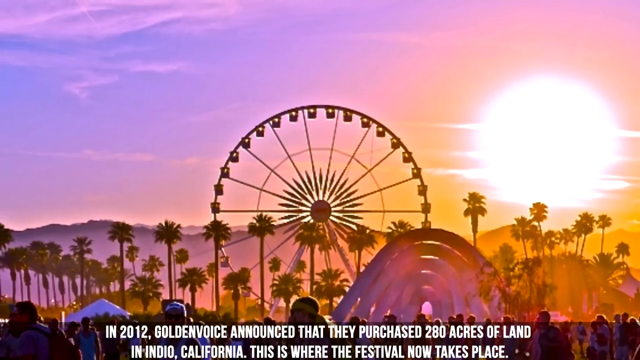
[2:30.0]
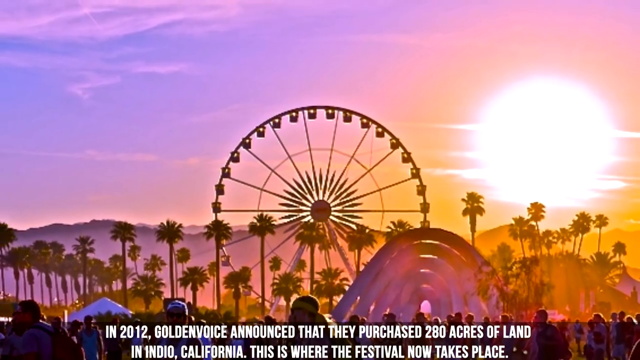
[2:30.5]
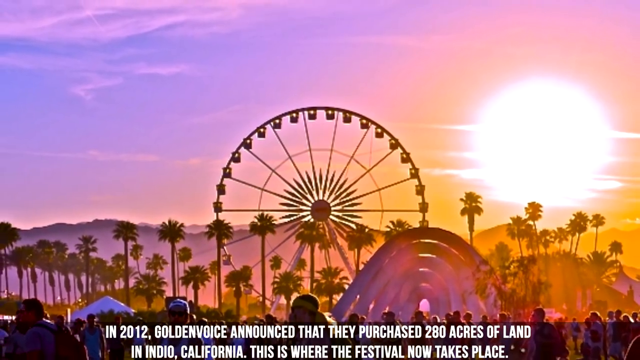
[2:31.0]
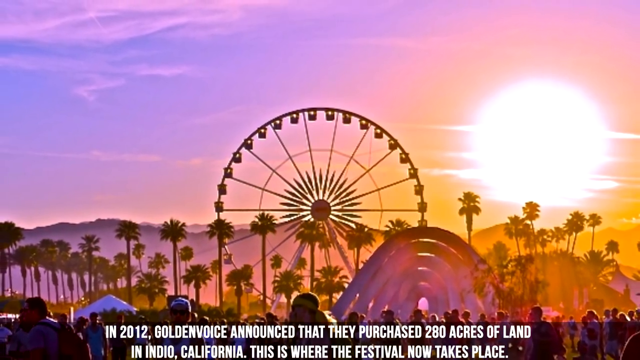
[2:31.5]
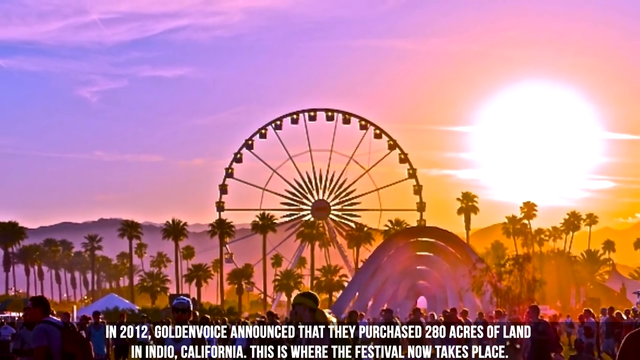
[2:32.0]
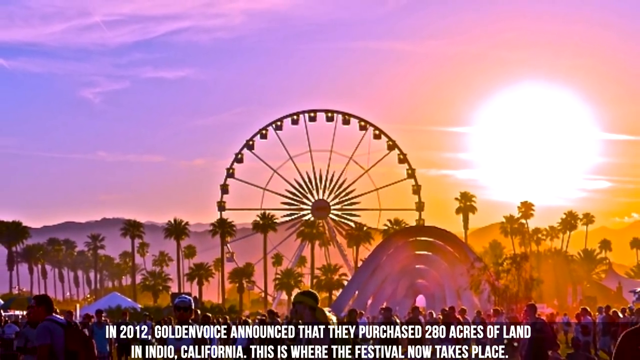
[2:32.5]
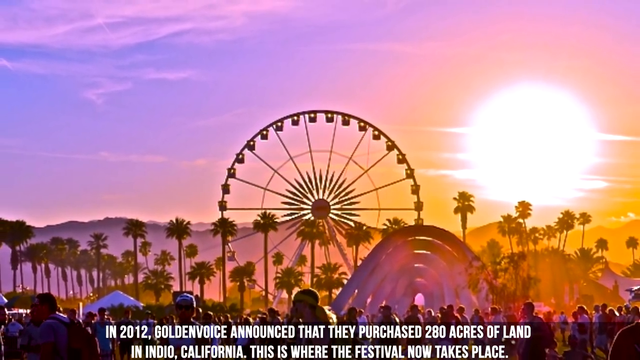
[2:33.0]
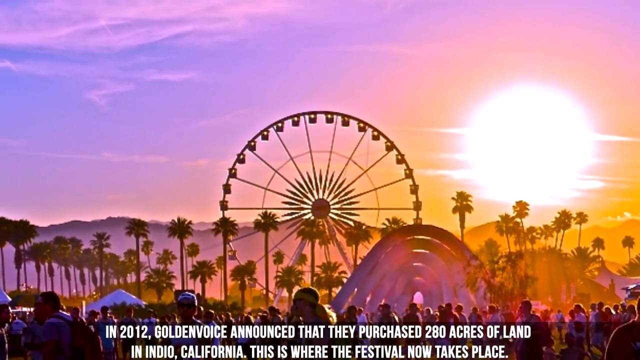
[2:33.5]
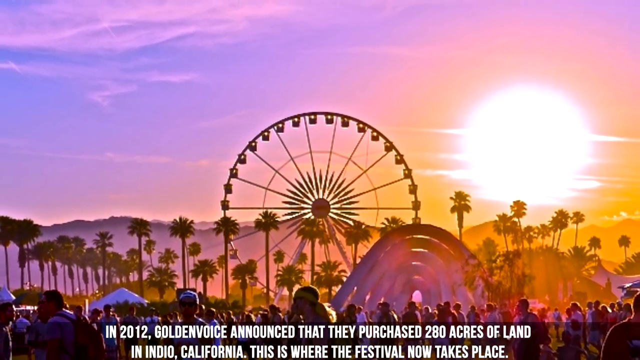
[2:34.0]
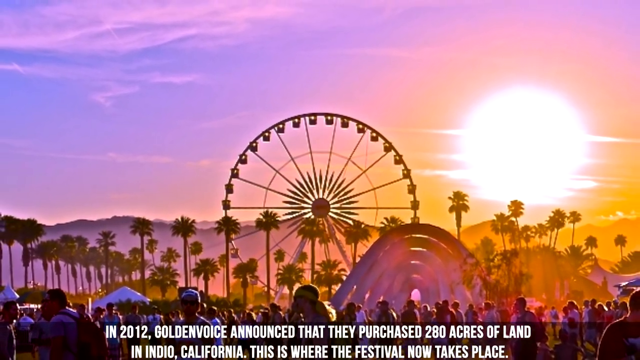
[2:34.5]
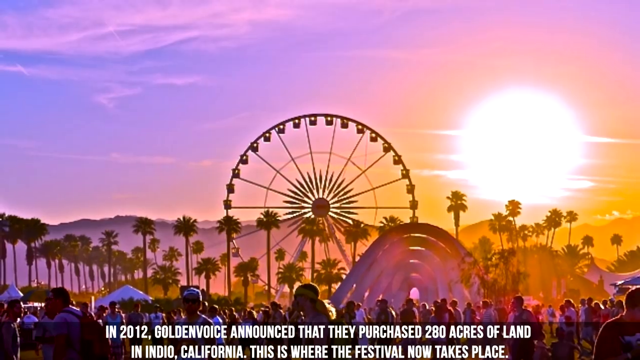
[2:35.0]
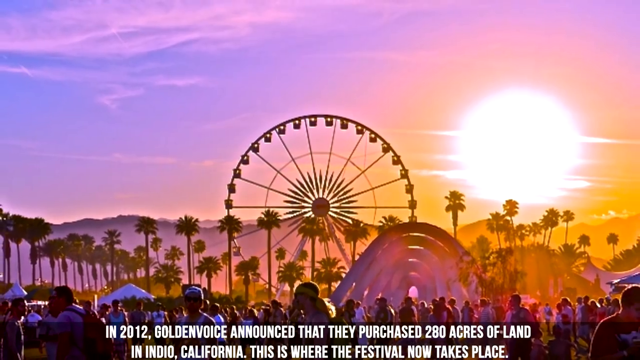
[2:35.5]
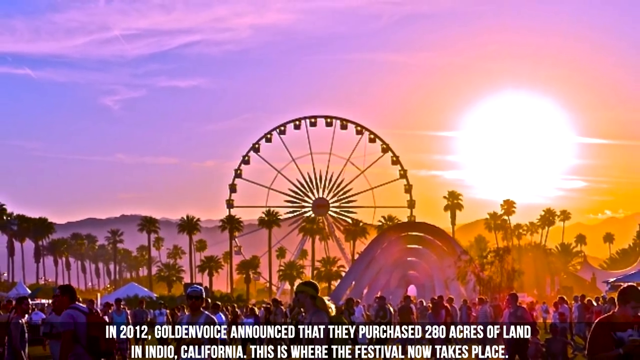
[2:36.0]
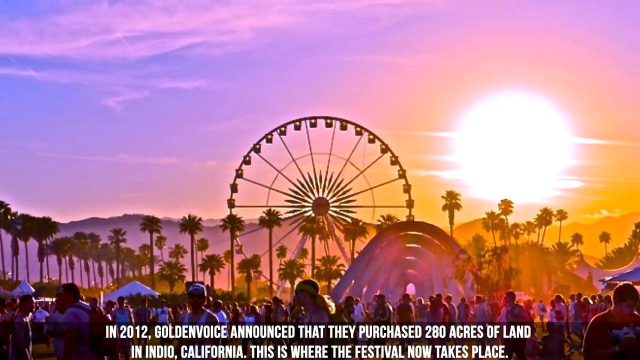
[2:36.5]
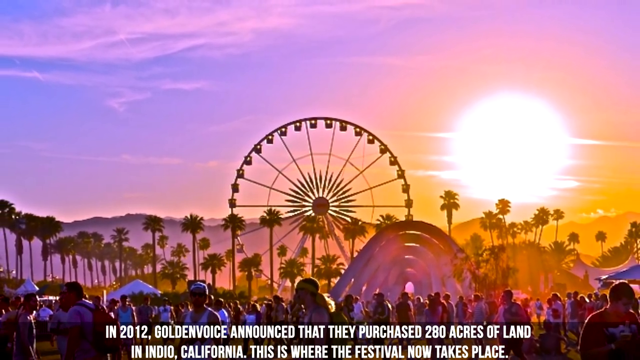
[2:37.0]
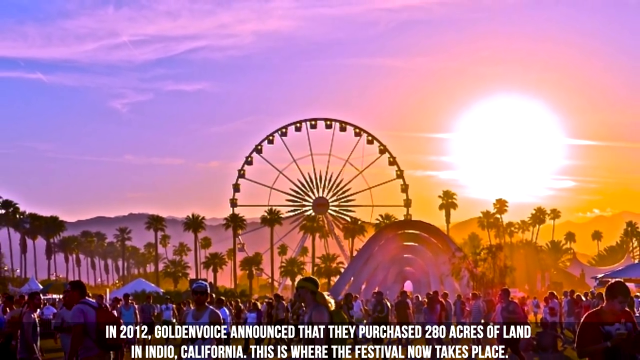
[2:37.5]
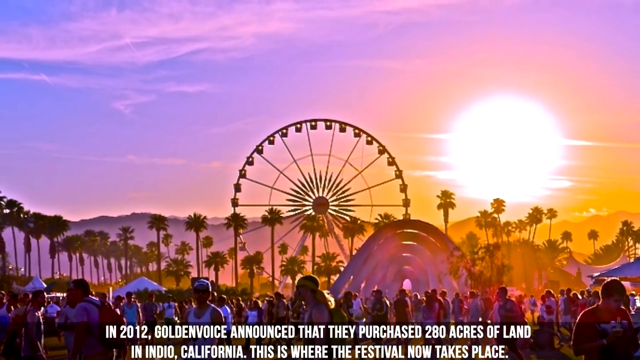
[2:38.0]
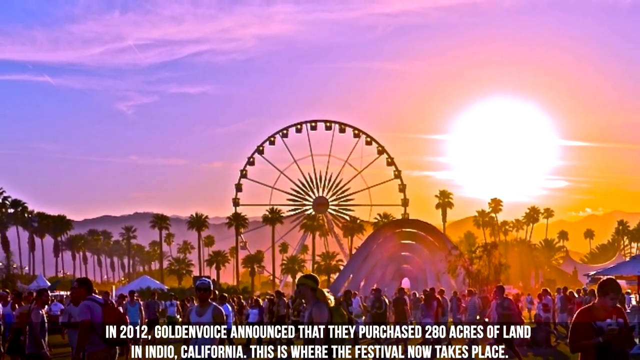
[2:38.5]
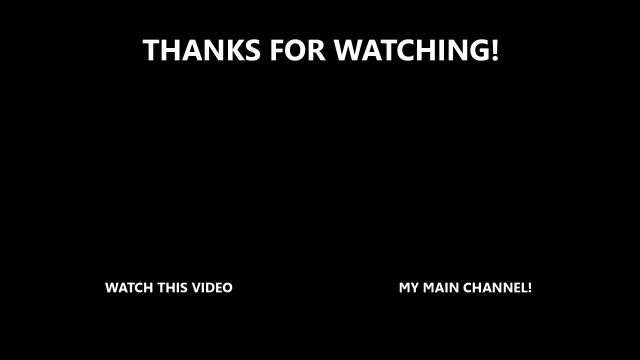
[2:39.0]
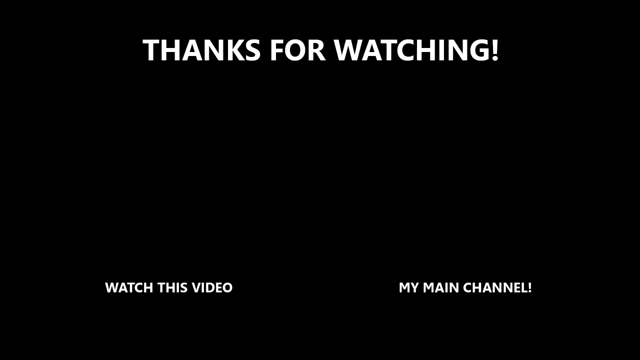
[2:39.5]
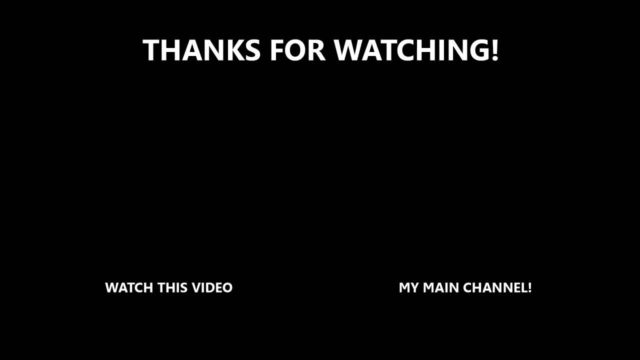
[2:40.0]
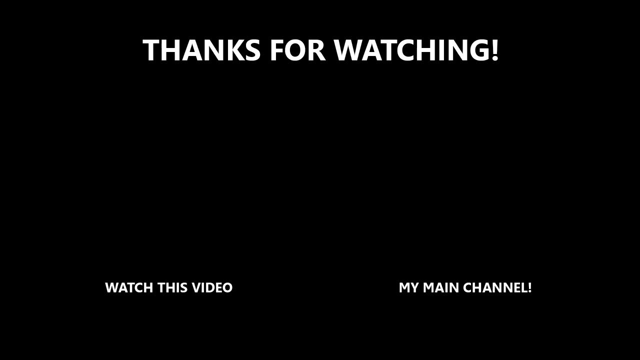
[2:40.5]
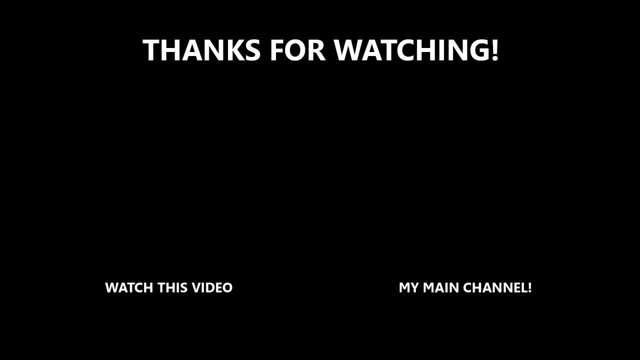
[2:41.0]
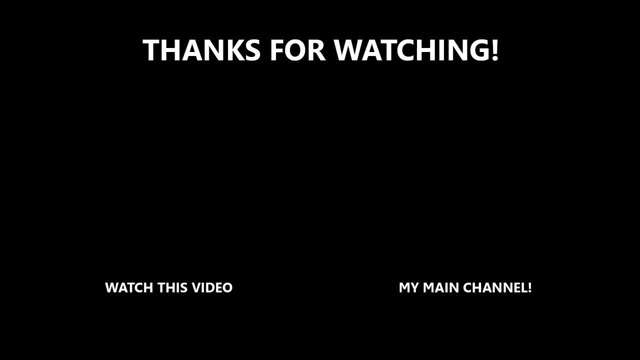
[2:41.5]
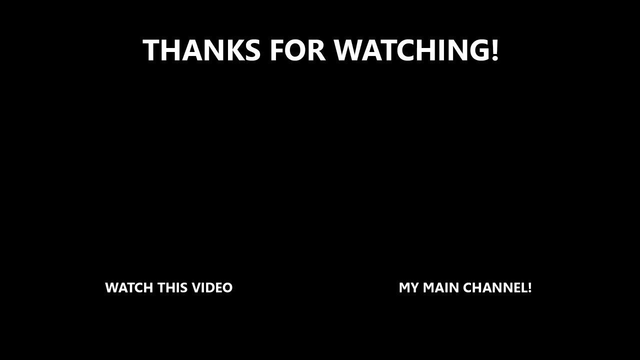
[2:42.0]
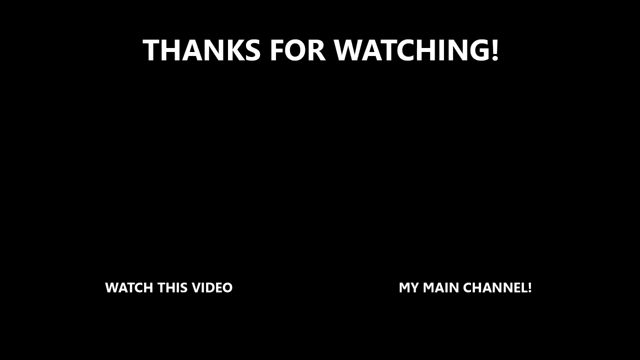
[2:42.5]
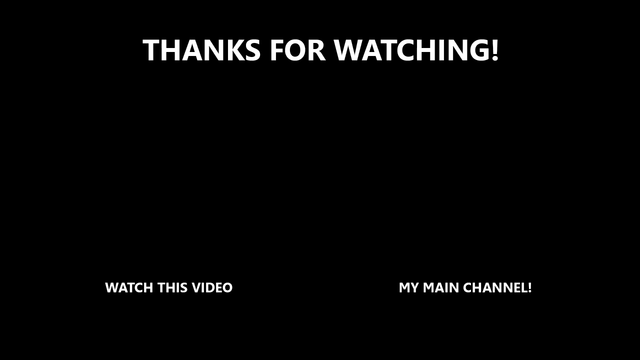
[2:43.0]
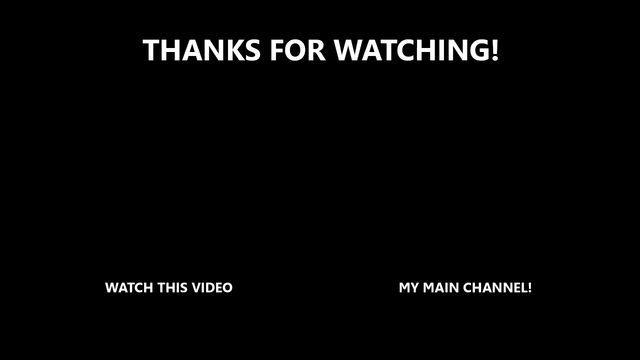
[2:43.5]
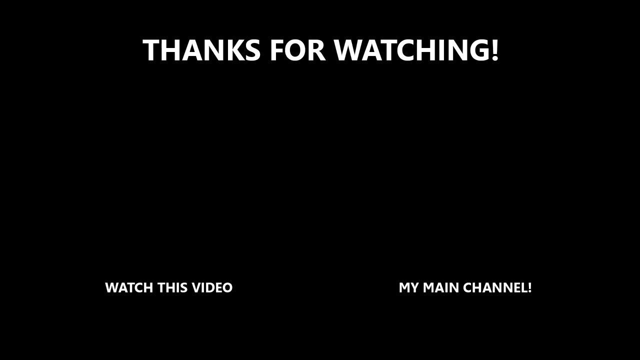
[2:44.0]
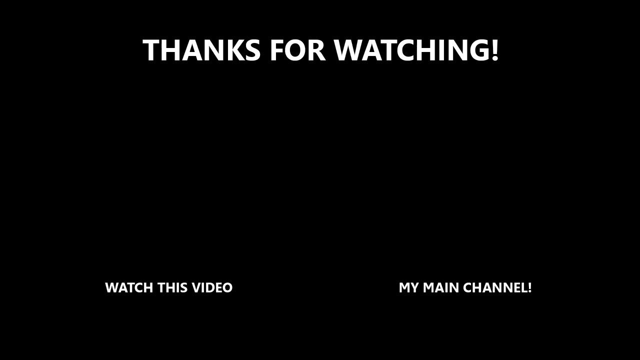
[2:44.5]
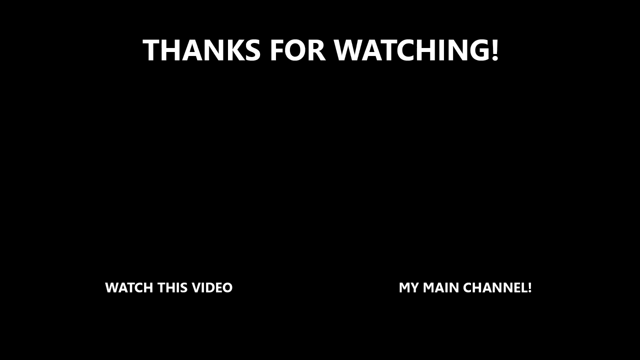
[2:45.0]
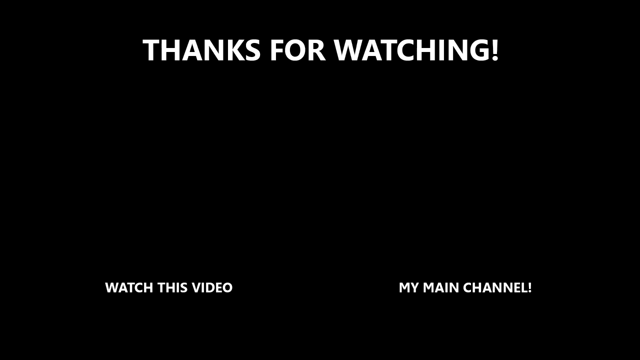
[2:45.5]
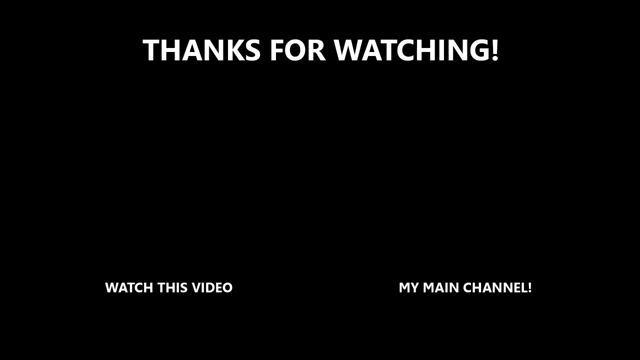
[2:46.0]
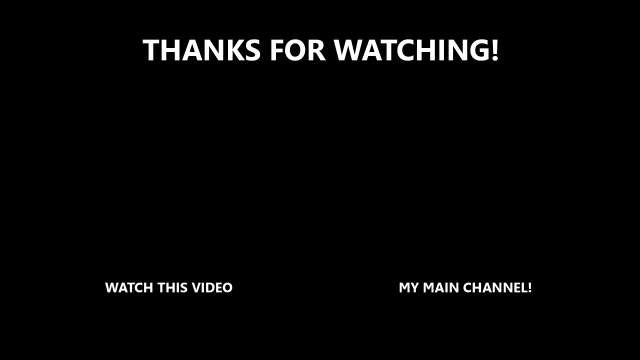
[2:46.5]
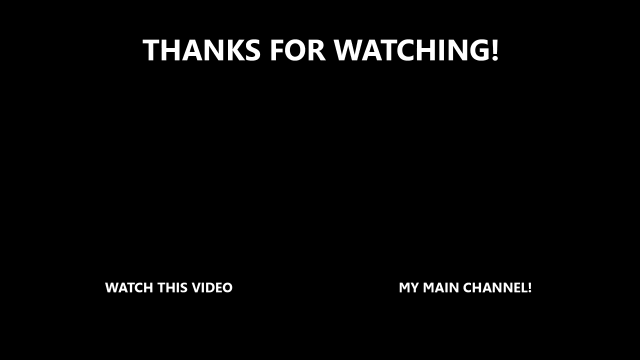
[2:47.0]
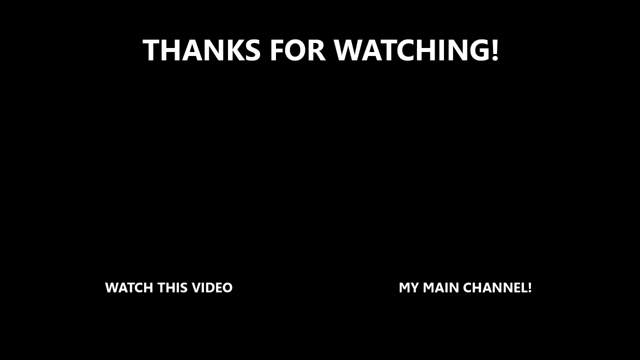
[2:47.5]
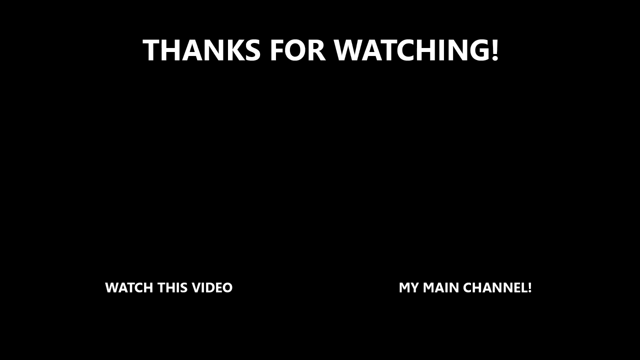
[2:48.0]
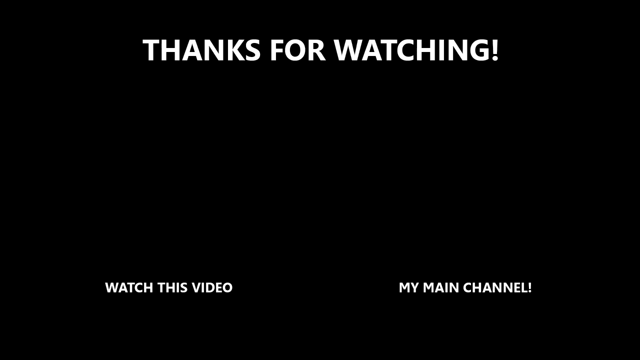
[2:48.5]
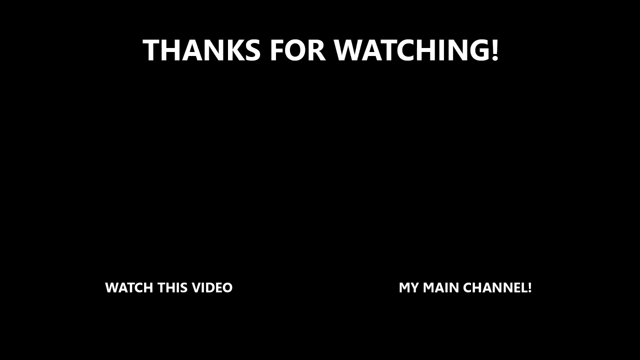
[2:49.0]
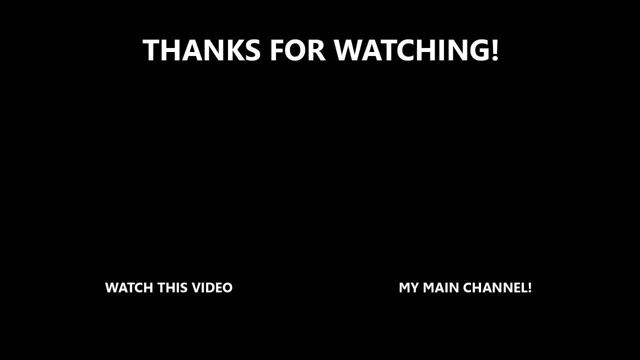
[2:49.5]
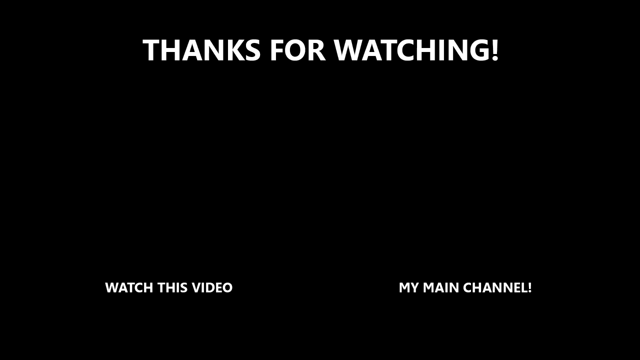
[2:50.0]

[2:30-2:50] Text at the bottom of the screen reads "In 2012, Golden Voice announced that they had purchased 200 acres of land in Indio". The image in the centre of the screen is of a giant ferris wheel, with the sun shining or setting to its right in purple and orange colours. As the camera pulls out, the image looks a bit like an animated one, but there are people walking around at the bottom of the frame, with a backdrop of trees, the setting sun, hills in the distance and pastel white and pink clouds in the sky. The video ends with on-screen text reading "thanks for watching", and the bottom of the screen says "watch this video" and "my main channel is on the right".